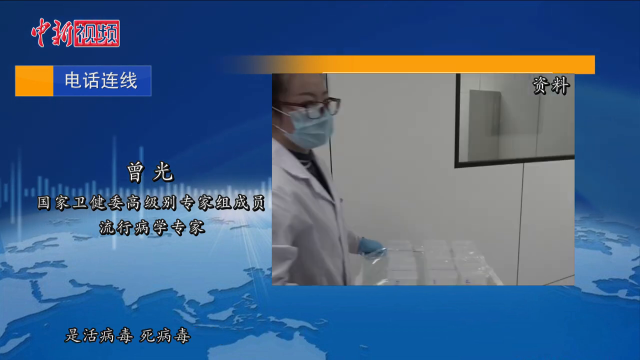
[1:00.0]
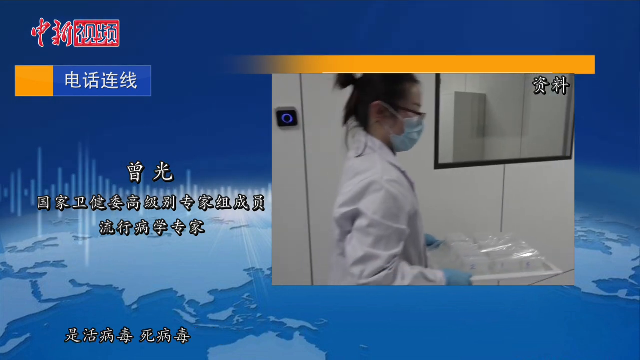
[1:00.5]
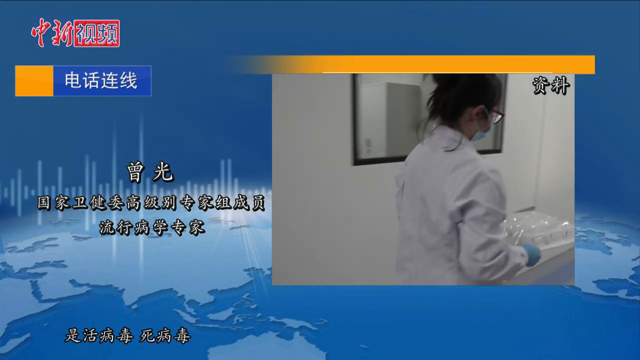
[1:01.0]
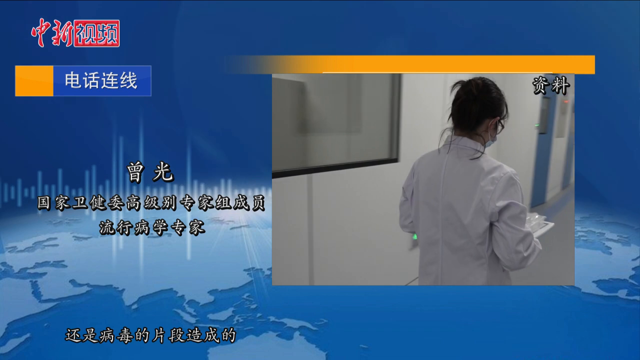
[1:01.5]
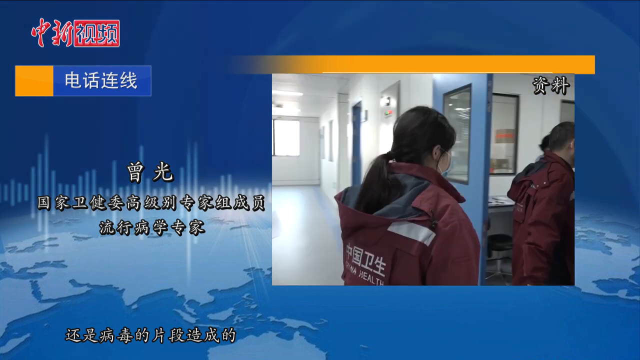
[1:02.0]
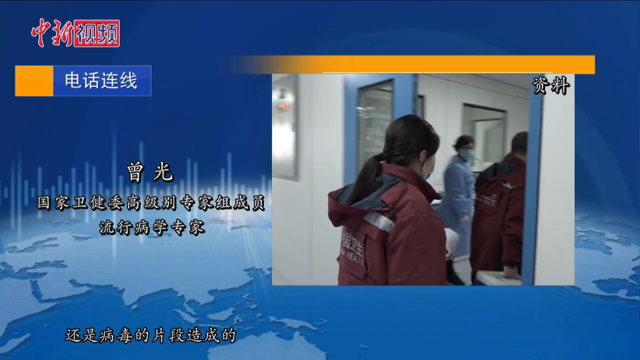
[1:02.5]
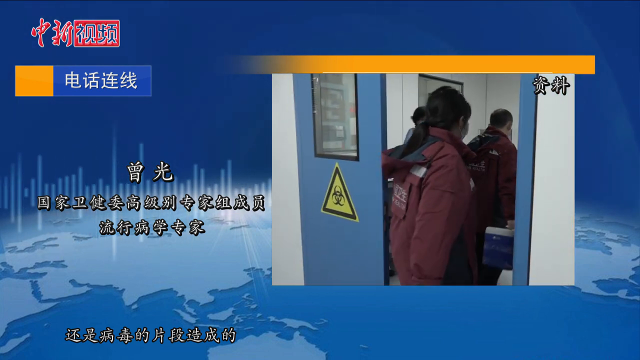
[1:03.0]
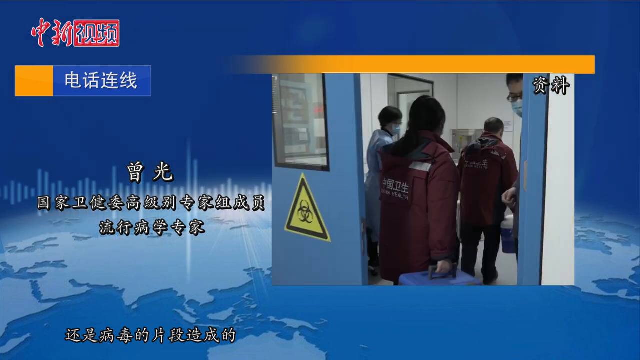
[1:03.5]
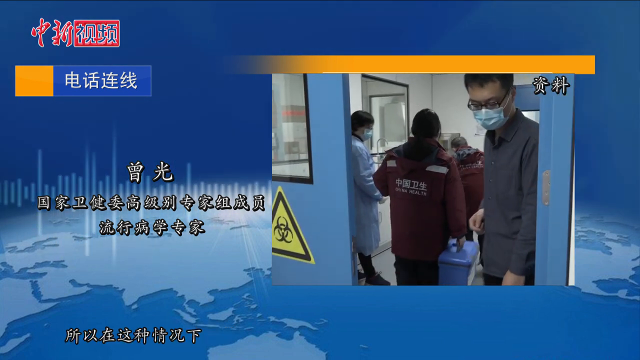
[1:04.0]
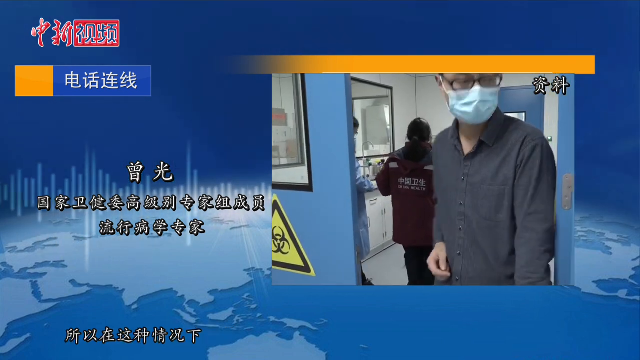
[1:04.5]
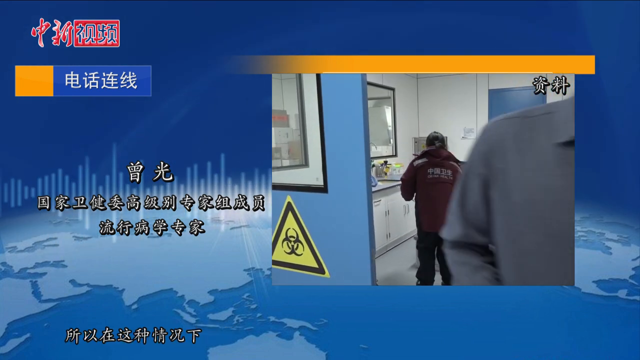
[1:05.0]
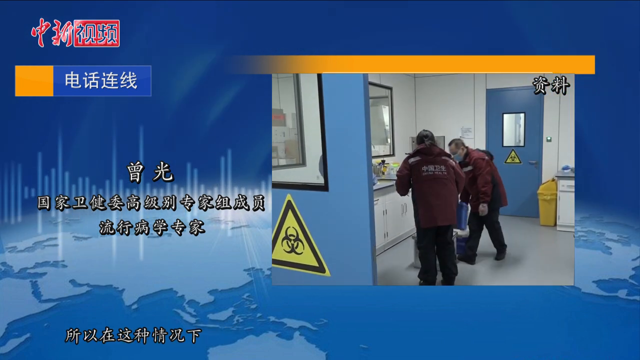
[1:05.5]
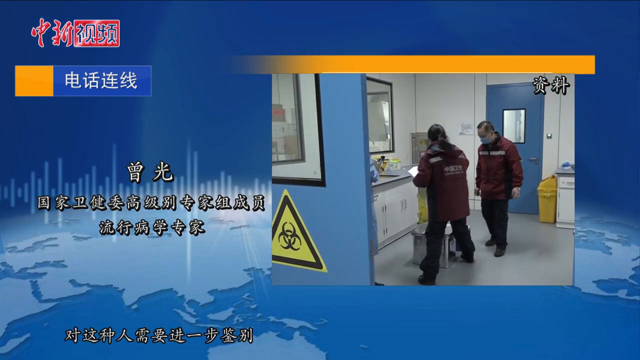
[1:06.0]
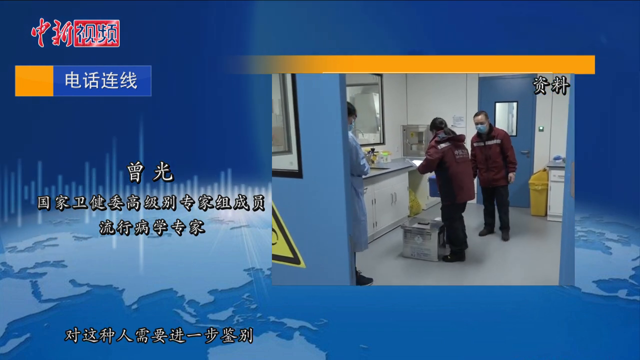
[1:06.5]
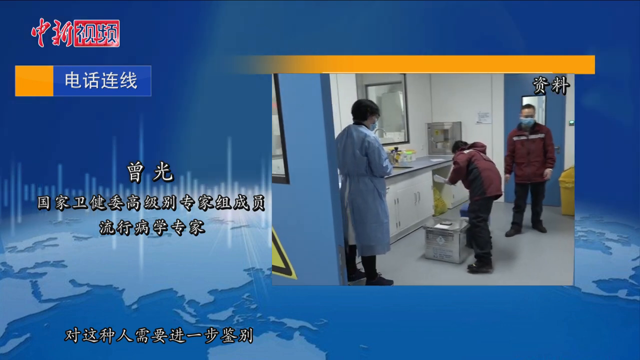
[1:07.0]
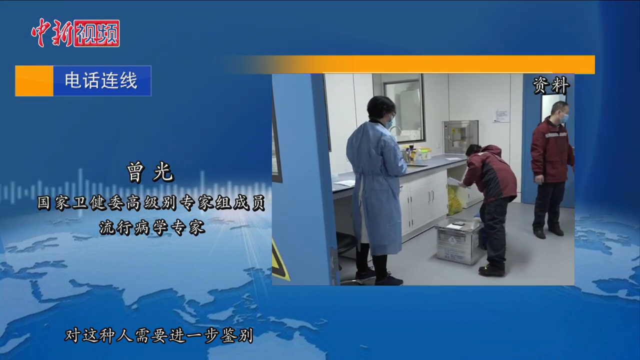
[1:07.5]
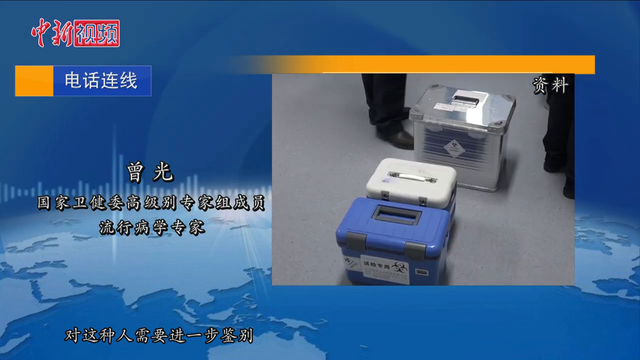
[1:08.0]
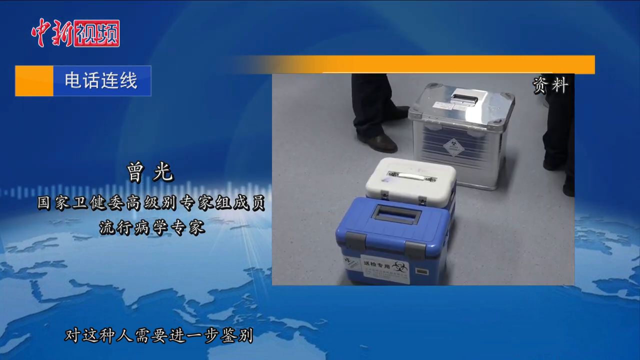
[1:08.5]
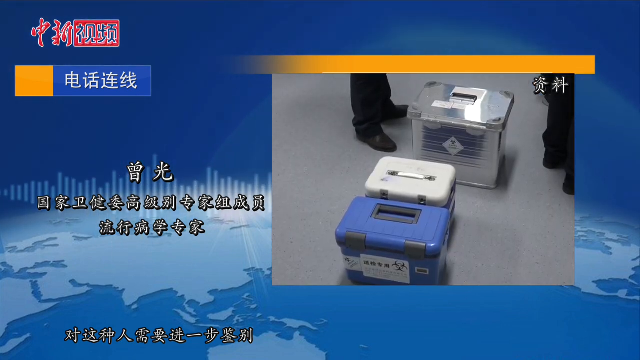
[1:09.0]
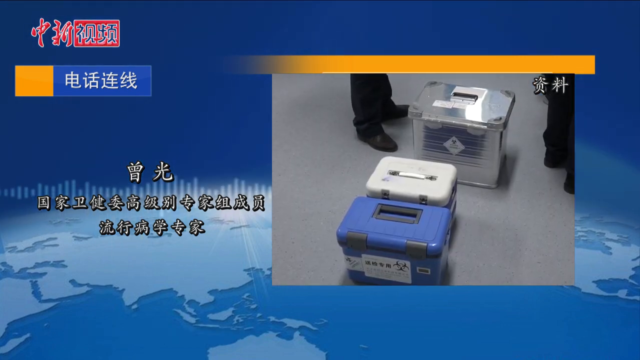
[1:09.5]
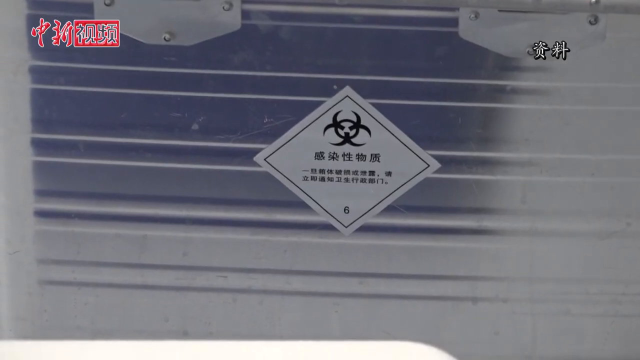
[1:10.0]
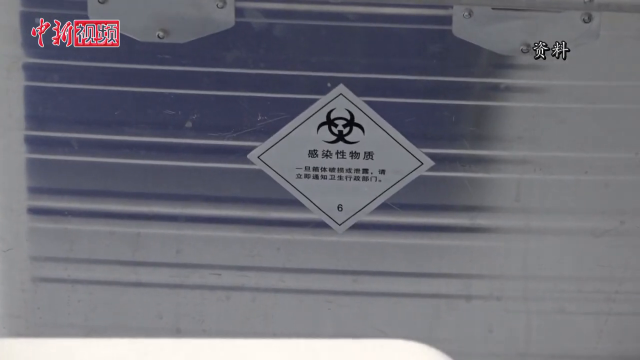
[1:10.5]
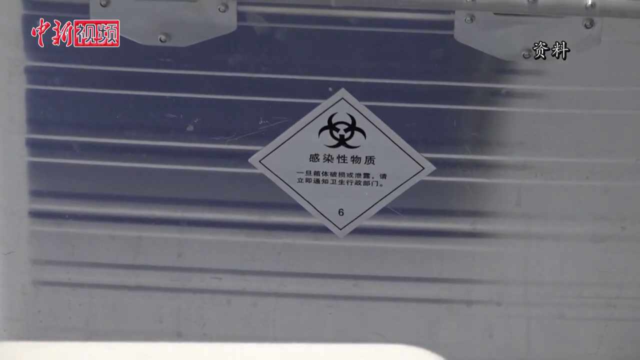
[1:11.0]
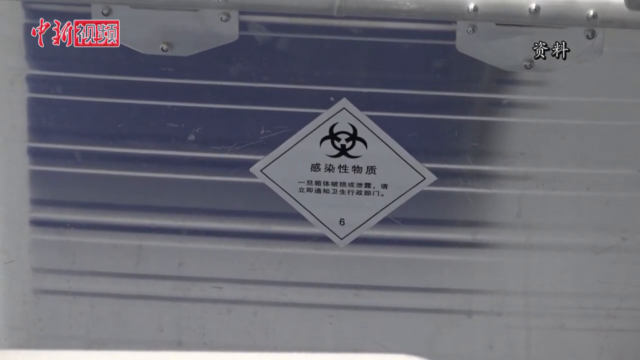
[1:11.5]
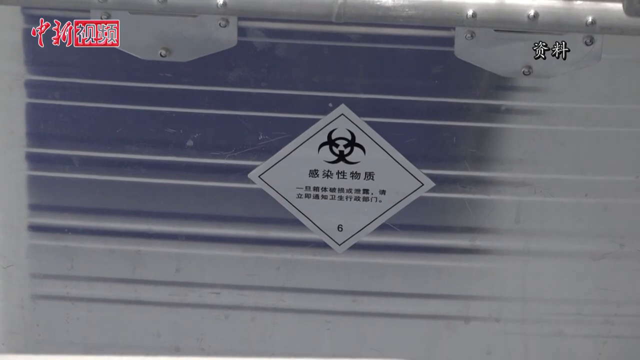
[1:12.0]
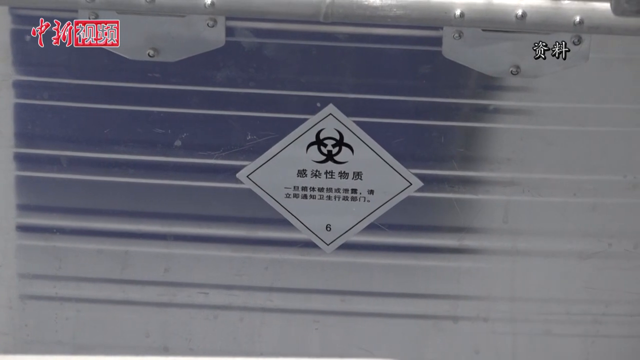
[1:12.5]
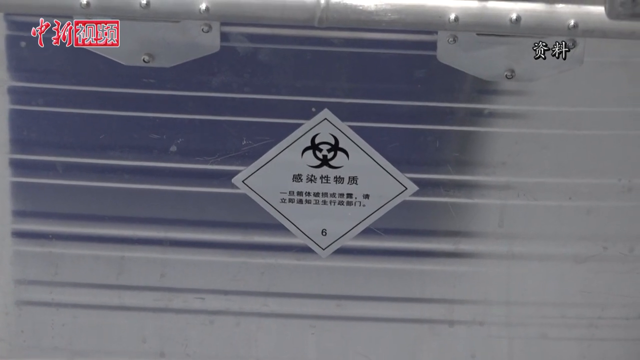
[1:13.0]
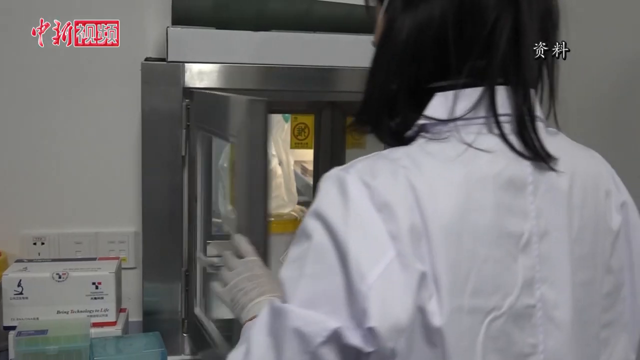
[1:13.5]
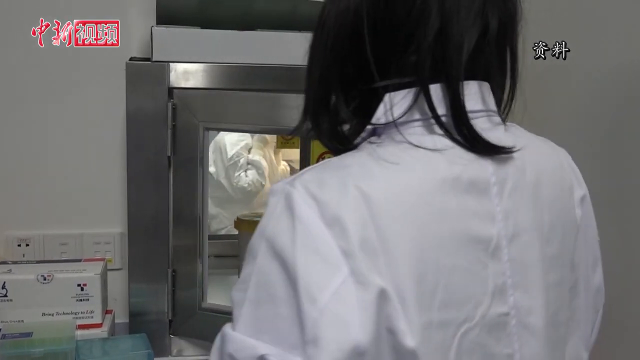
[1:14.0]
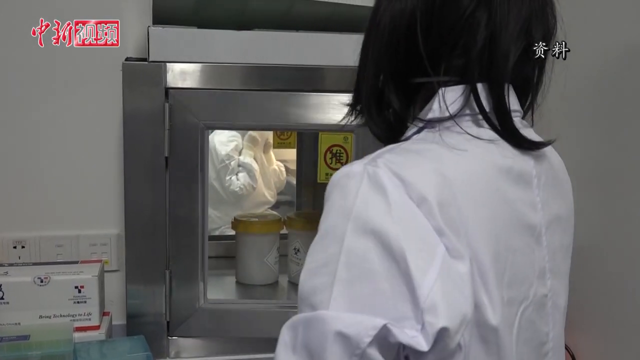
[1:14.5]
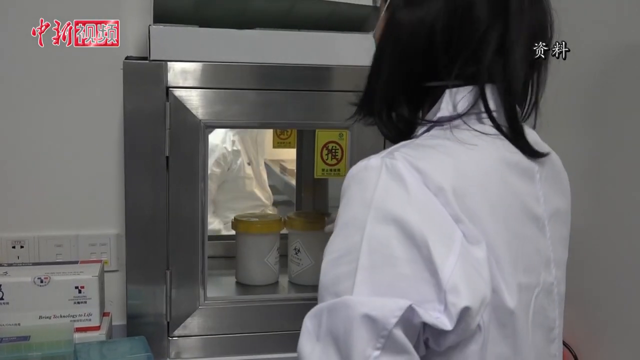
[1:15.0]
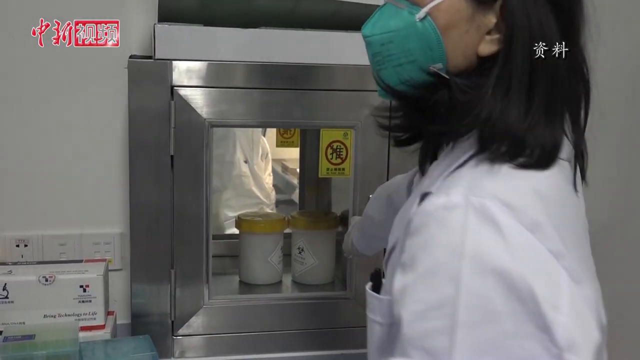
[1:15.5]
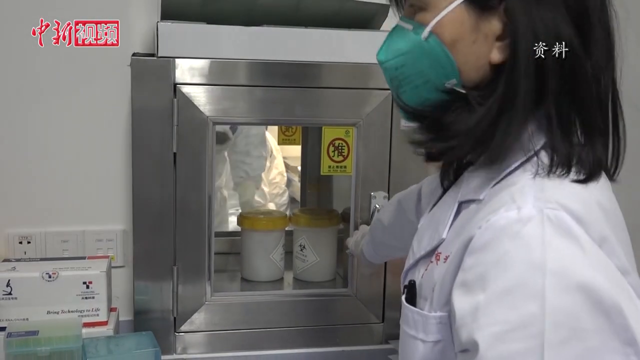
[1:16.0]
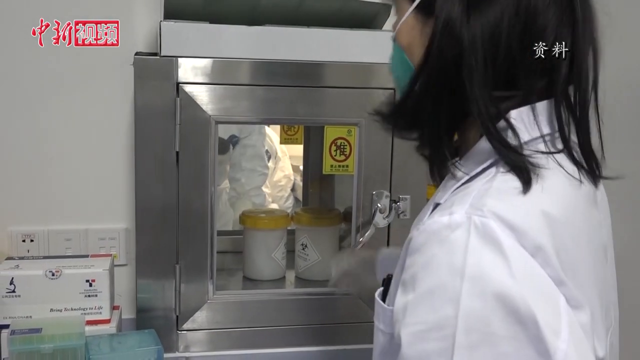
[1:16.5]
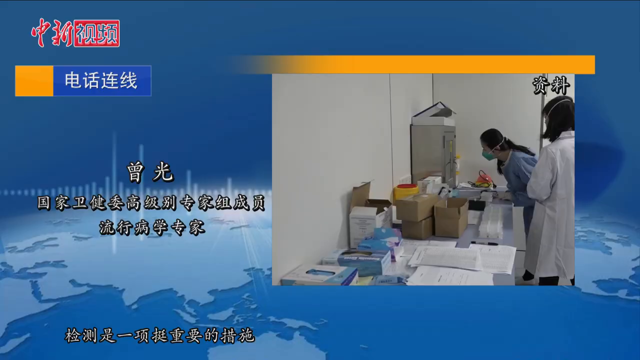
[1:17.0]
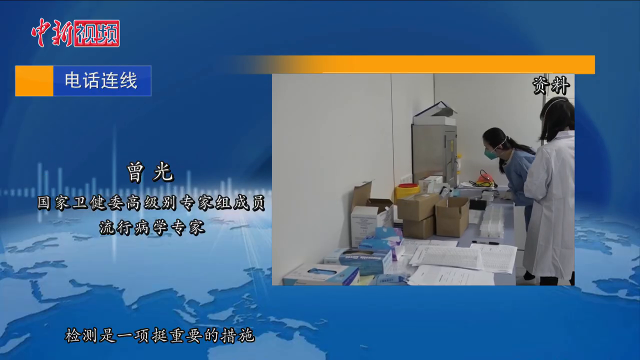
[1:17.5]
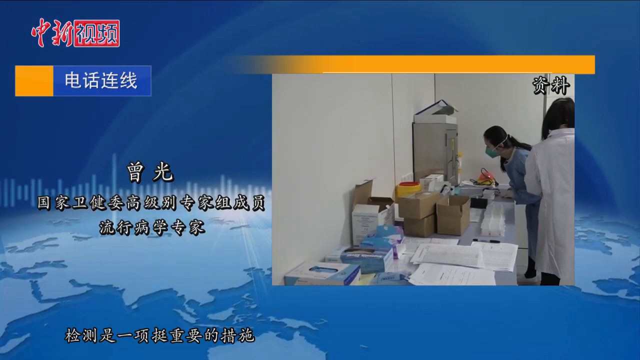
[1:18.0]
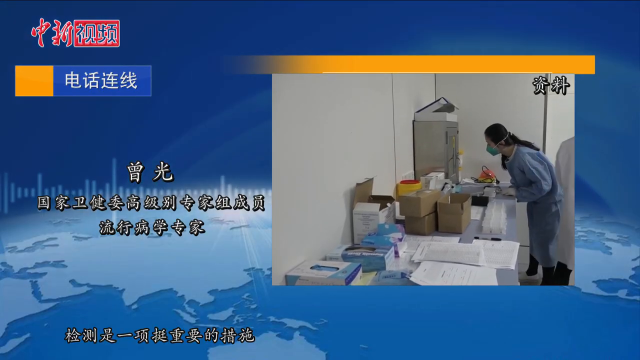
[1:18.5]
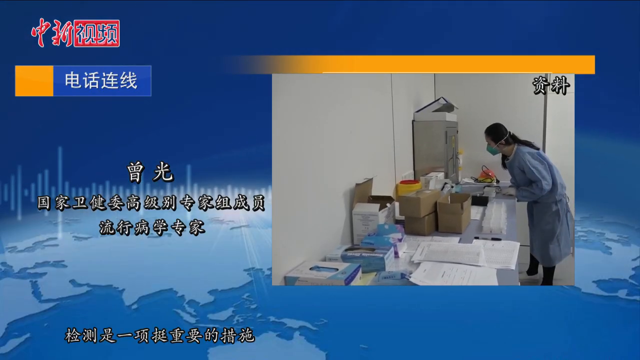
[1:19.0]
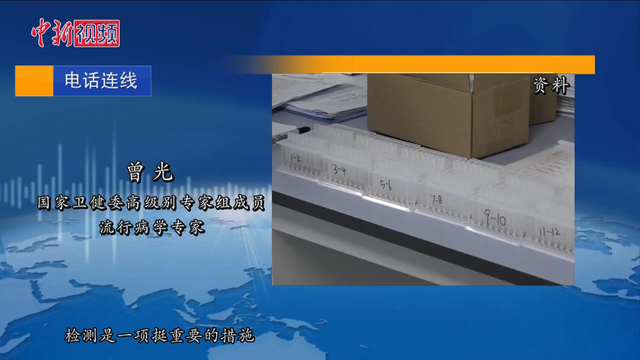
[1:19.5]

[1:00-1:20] More of the containers appear, along with various lab work with biohazard material. Much of the footage plays inside a small window on a bigger graphic background with a world on its lower half. There are logos in the top left, text on the left-hand side in the middle running vertically, and more text at the bottom. The footage switches between taking up the full screen and being a small window. A couple of women in purple jackets walk with cases filled with the material, and jars with yellow lids are transferred back and forth between different cases.